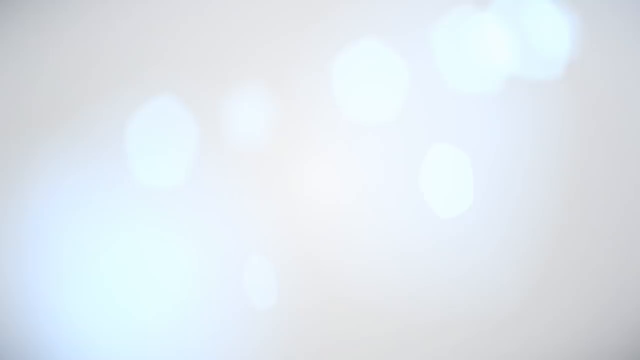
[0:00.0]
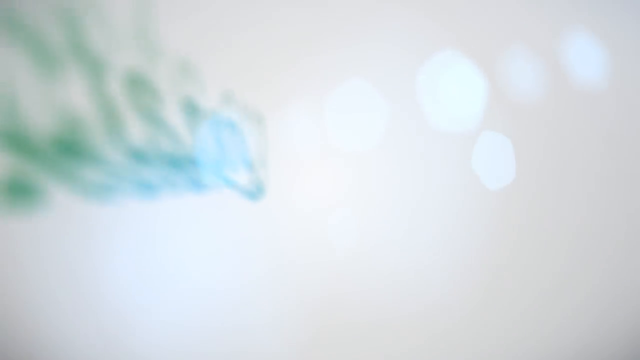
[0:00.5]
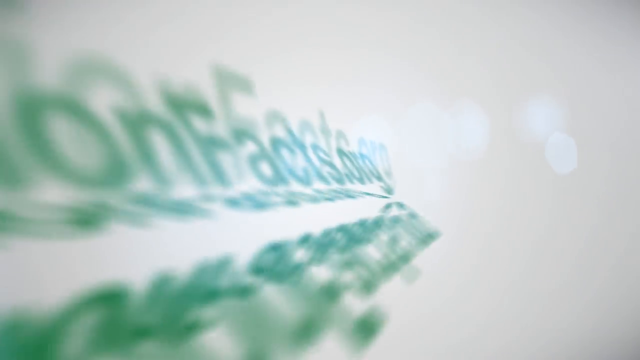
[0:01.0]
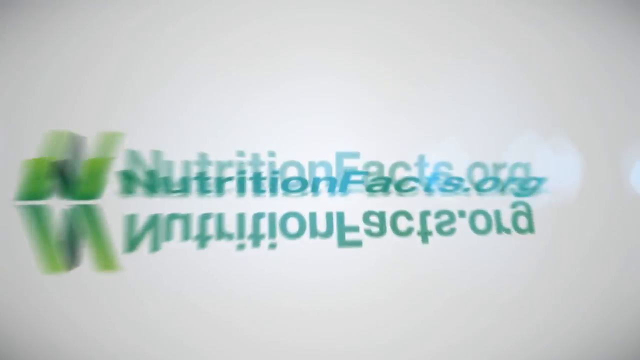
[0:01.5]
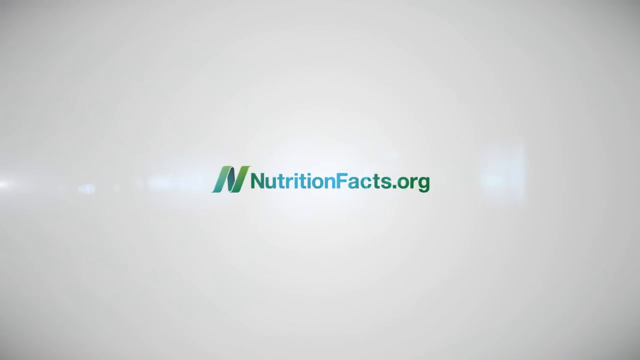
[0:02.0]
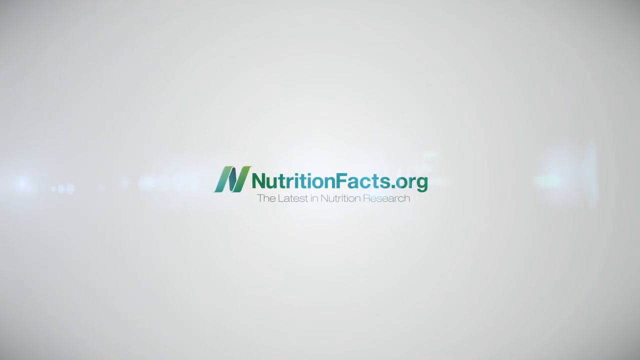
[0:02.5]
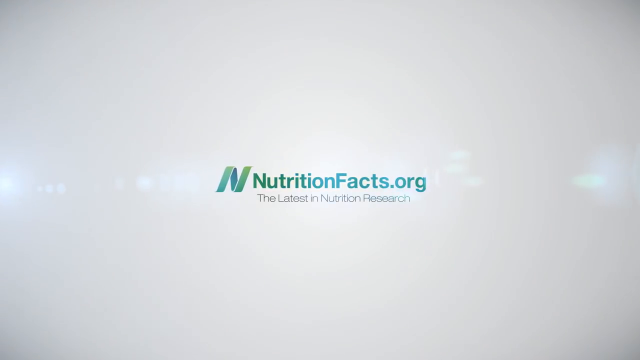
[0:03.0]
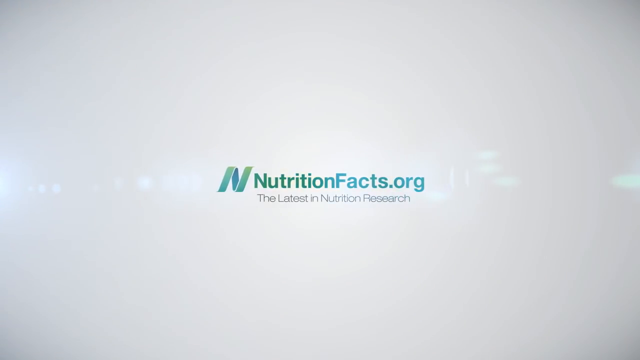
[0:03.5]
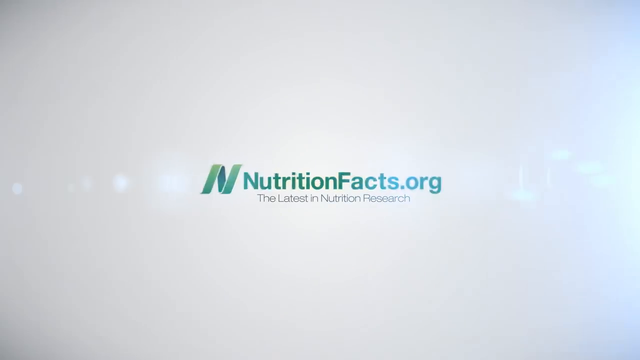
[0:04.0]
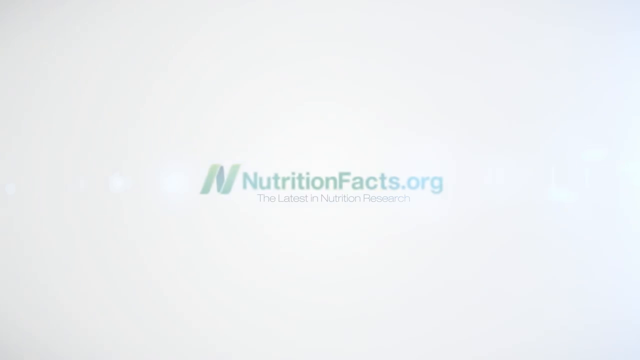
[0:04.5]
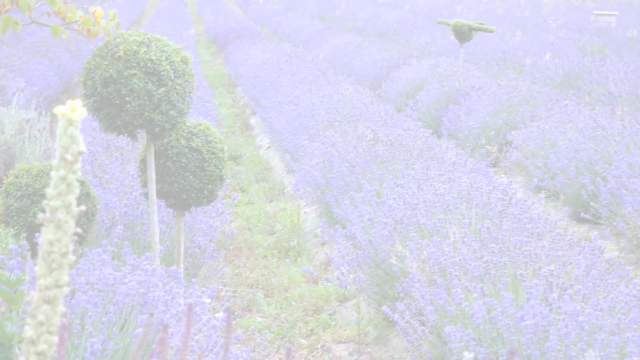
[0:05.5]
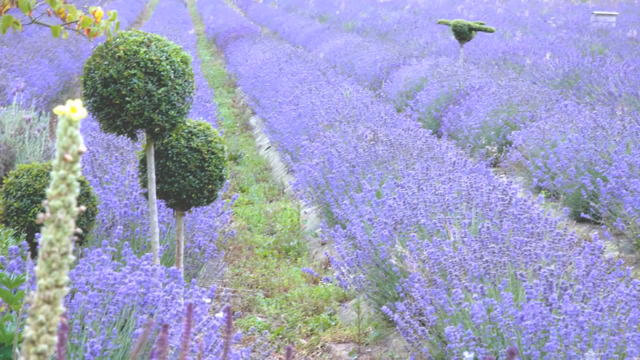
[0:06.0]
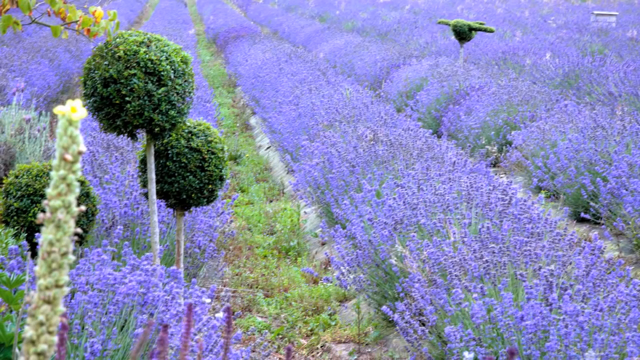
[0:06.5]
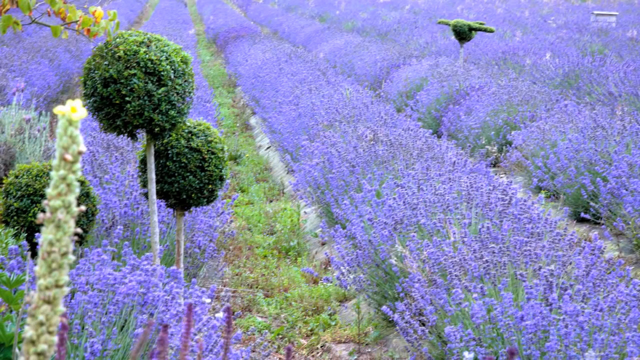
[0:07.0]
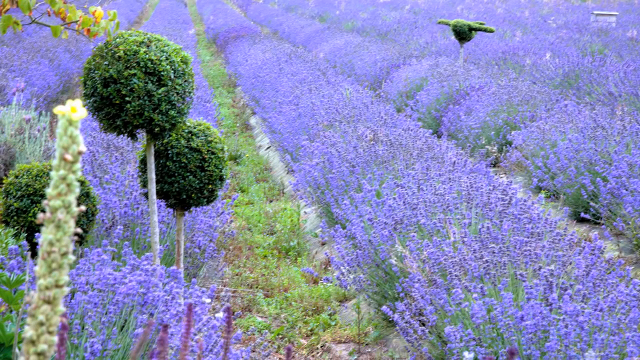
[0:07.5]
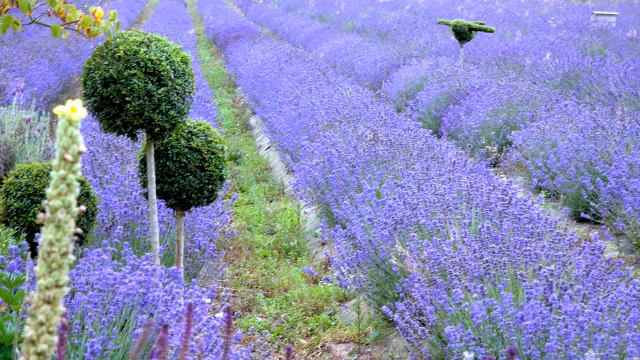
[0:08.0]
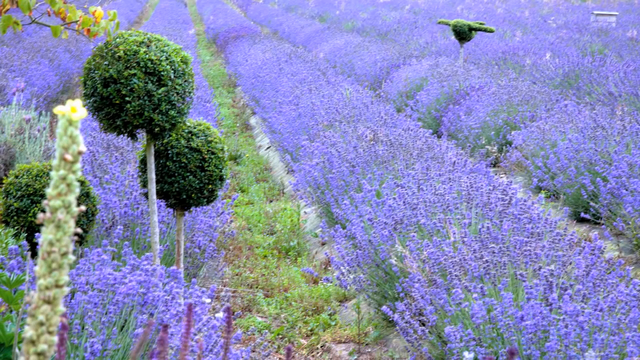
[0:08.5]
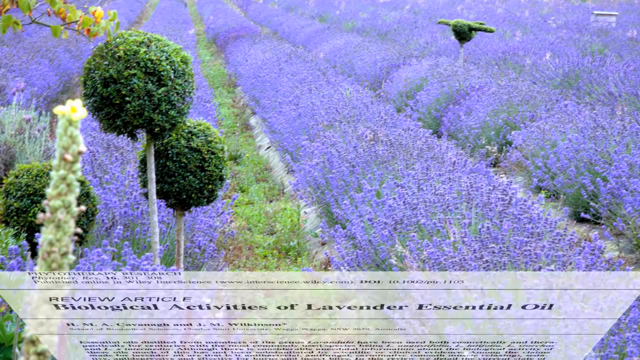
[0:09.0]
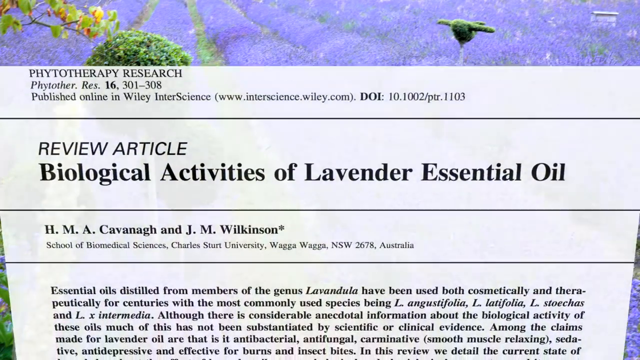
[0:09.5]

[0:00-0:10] The video opens on a kind of hazy, grey, almost cloudy screen, and then the Nutritionfacts.org logo appears in the centre. The logo is mainly green with some blue. Underneath it, smaller grey letters say "the latest in nutrition research". The scene then moves to what appears to be a lavender field, with rows of bluish-purple lavender plants in bloom. There are also some apparently very well-manicured trees. Two of them on the left-hand side of the screen look almost like lollipops, spherical greenery presumably on a stick or trunk, and another on the right-hand side looks like it might be shaped like a bumblebee.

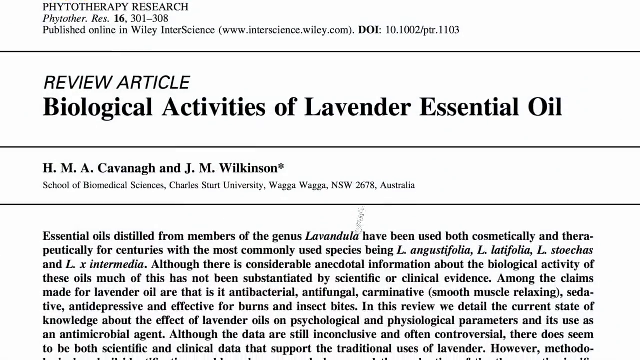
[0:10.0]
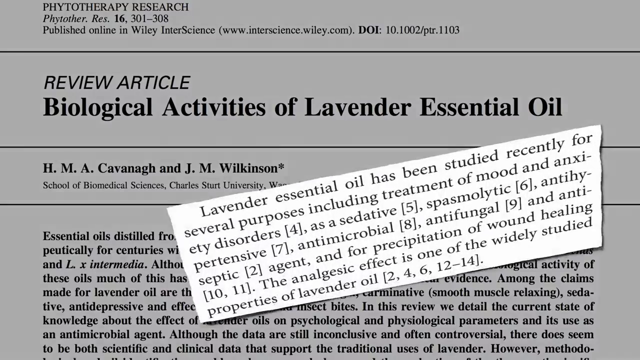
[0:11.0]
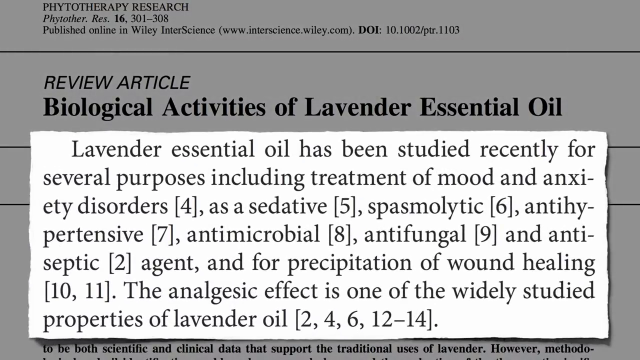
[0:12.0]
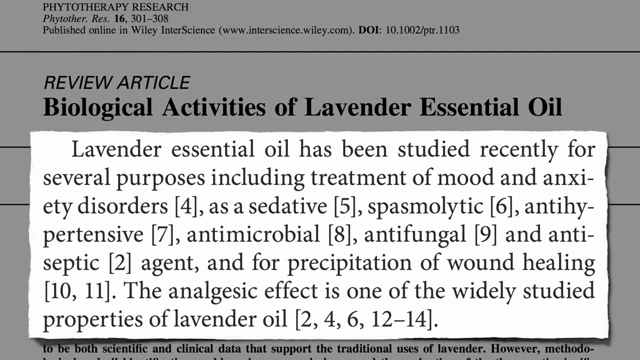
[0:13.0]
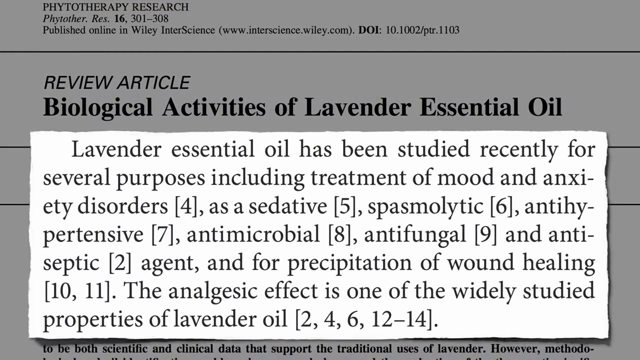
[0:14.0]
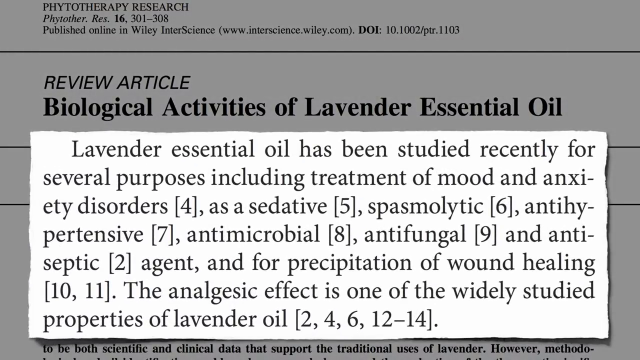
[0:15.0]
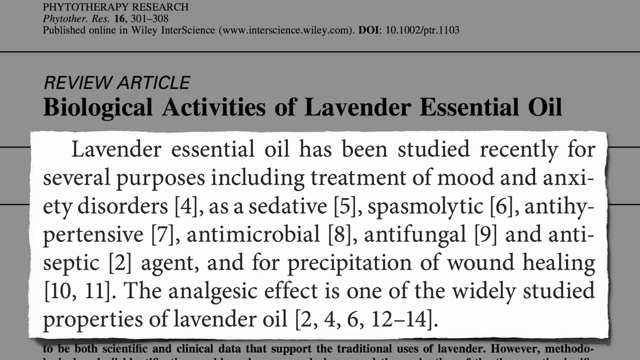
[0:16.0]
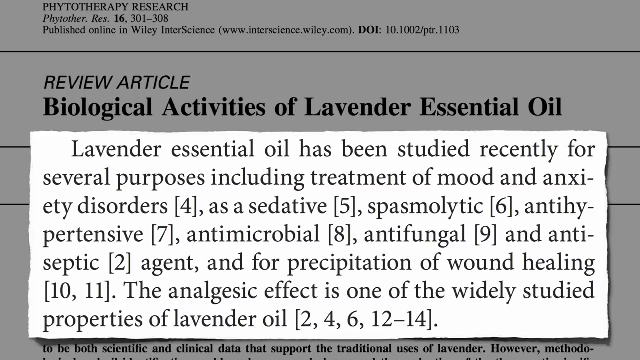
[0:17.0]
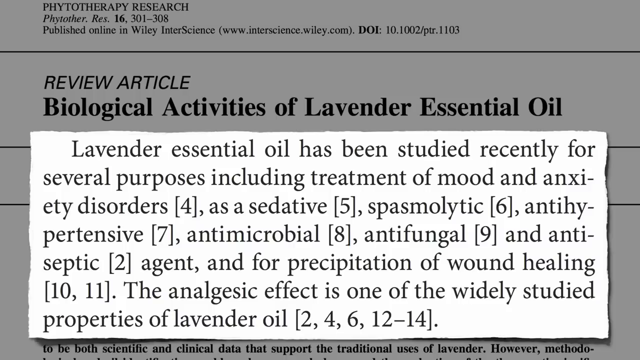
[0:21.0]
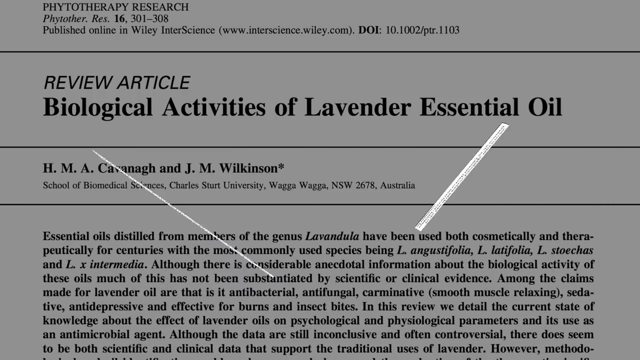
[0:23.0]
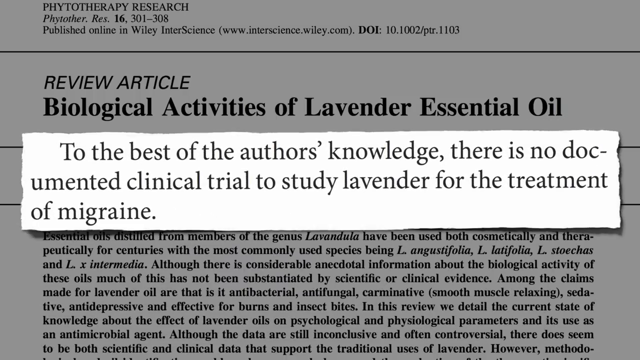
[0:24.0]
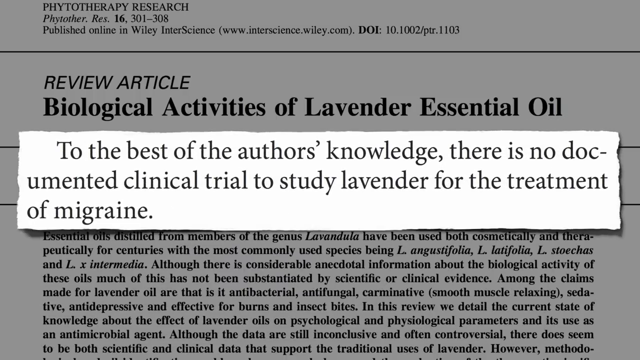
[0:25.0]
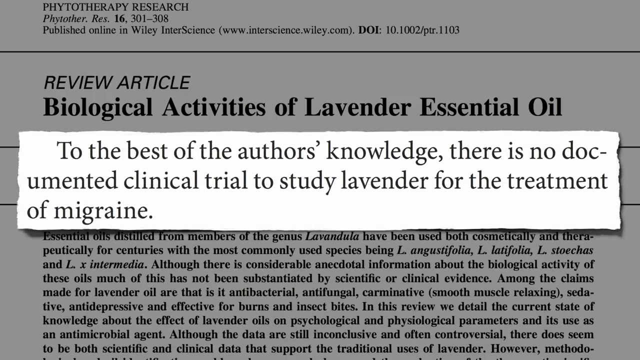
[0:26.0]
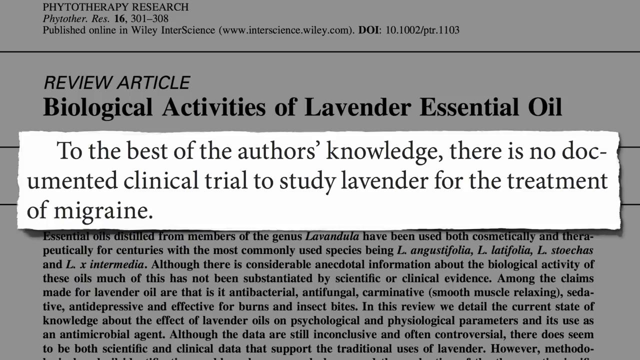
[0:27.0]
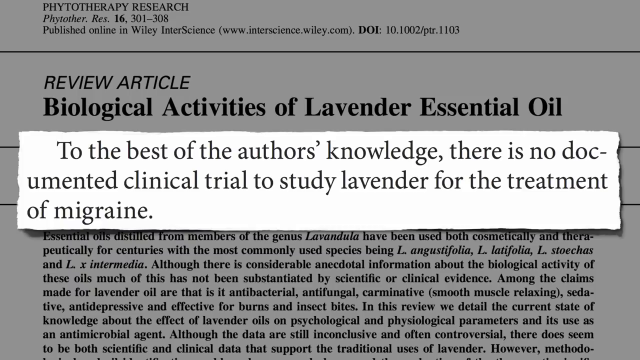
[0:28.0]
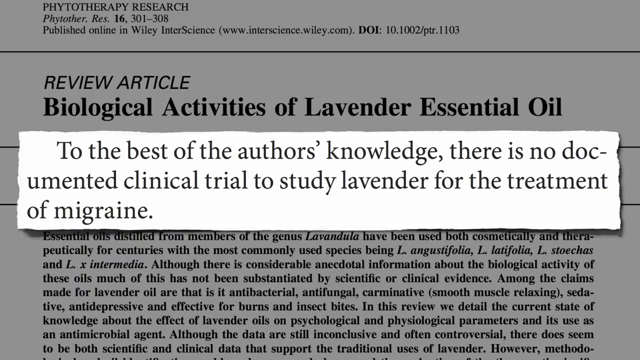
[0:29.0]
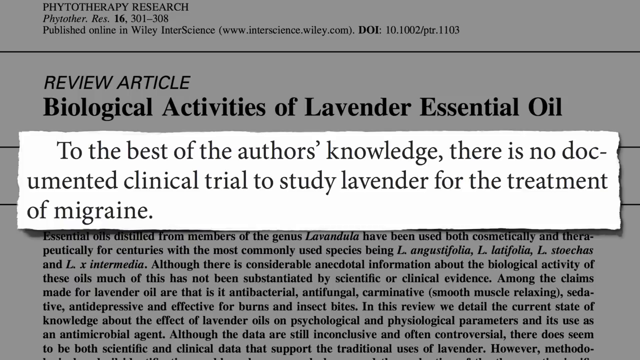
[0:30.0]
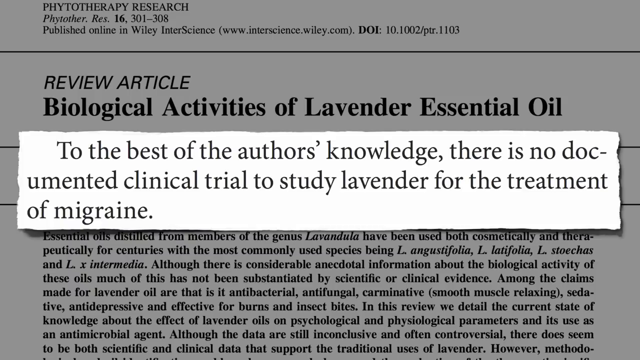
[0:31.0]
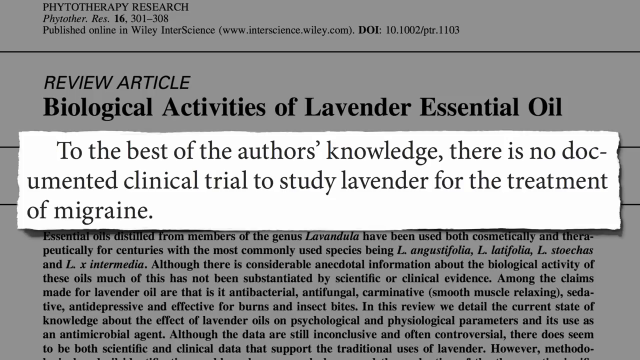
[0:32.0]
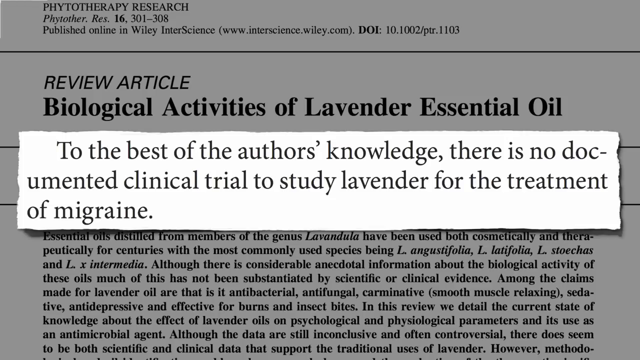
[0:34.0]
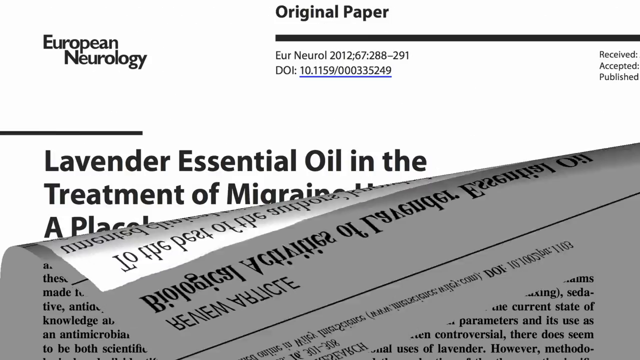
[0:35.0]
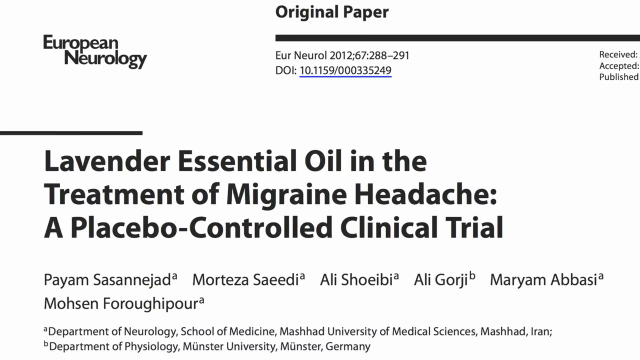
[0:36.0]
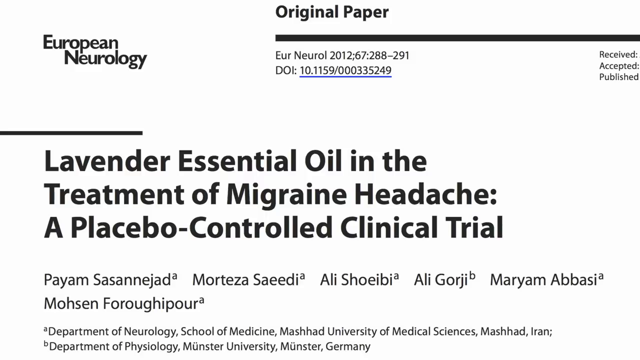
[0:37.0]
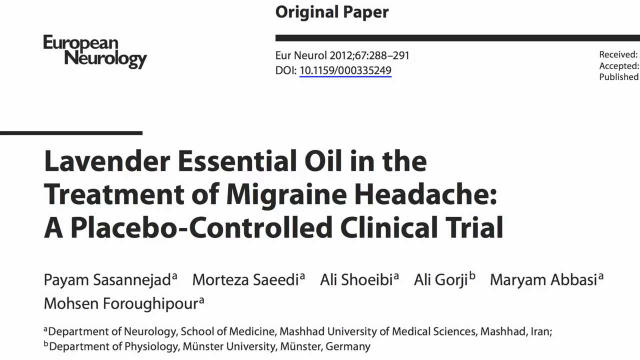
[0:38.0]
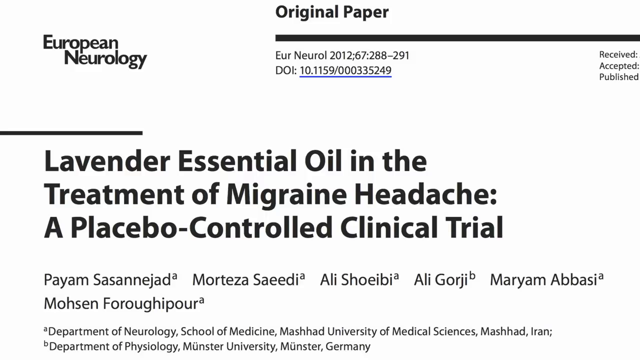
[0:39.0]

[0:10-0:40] A picture of a journal or newspaper article titled "Biological Activities of Lavender Essential Oil" appears. It is on screen only briefly before part of the article is enlarged and comes up in the centre of the screen. This section states that lavender essential oil has been used for treating mood and anxiety disorders, as a sedative, spasmolytic, antihypertensive, antimicrobial, antifungal and antiseptic, and as a liquid for wound healing. It stays on the screen for quite a long time. The next enlarged section of the article states that there is no documented clinical trial to study lavender for treatment of migraine, and it also stays on screen for quite a while. The whole page is then almost peeled away, revealing another article, an original paper from the European Neurology titled "Lavender Essential Oil in the Treatment of Migraine Headache, a Placebo Controlled Clinical Trial".